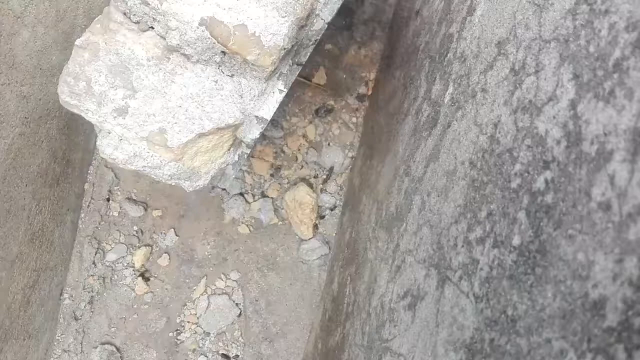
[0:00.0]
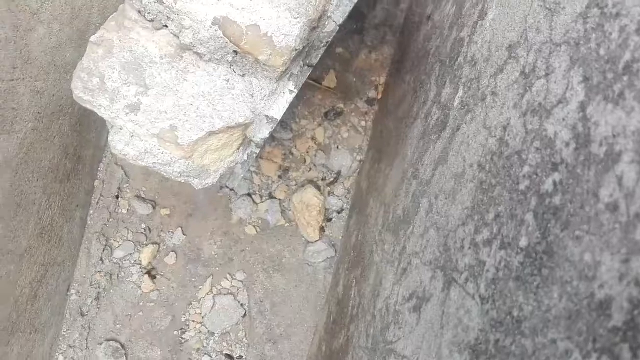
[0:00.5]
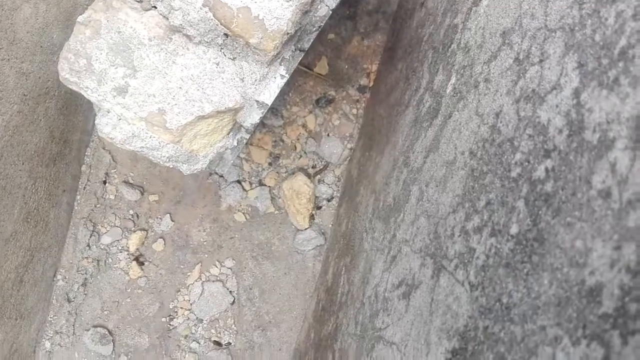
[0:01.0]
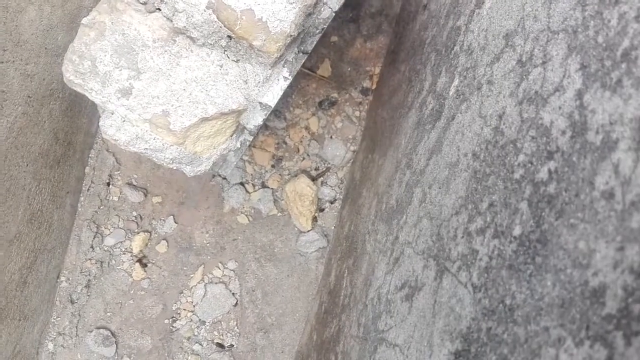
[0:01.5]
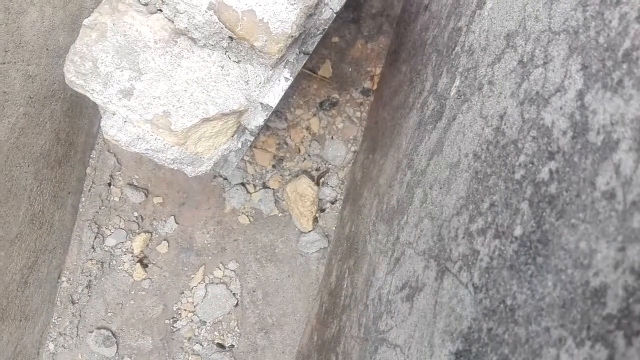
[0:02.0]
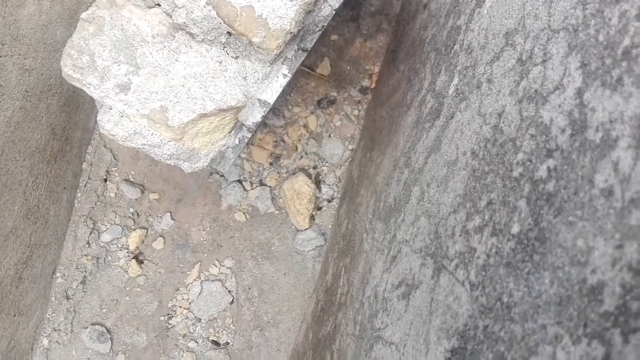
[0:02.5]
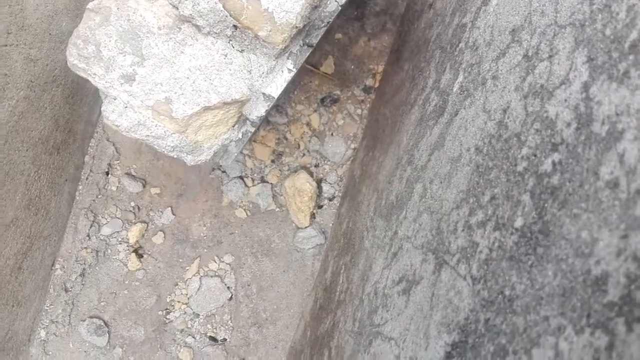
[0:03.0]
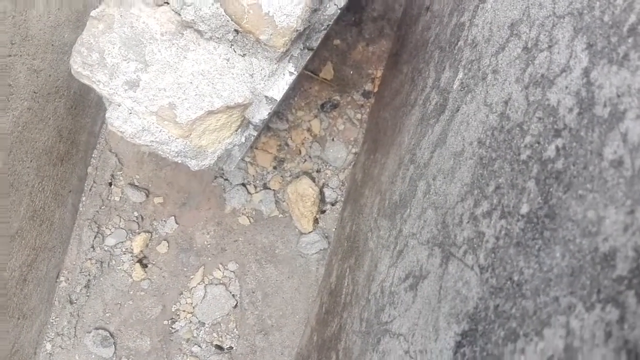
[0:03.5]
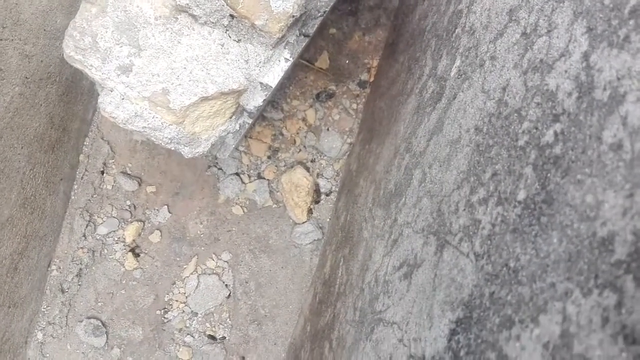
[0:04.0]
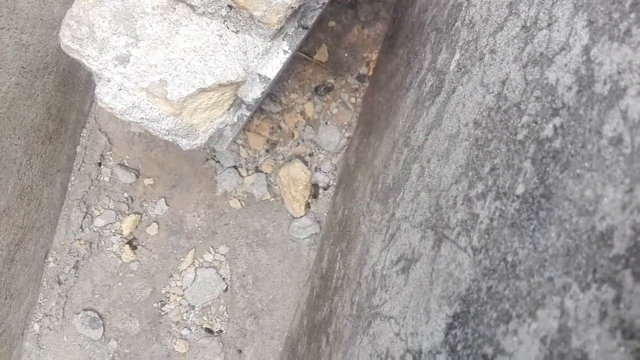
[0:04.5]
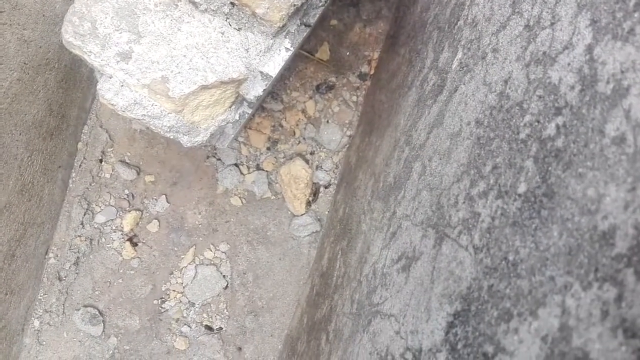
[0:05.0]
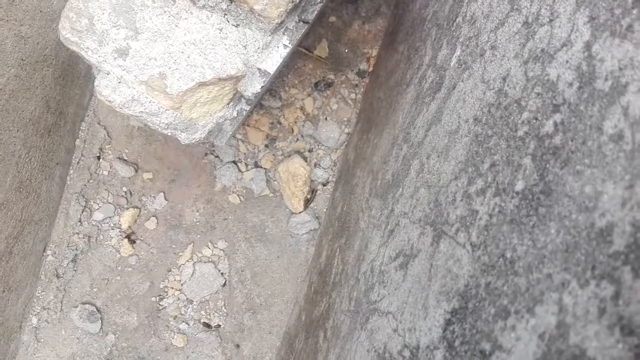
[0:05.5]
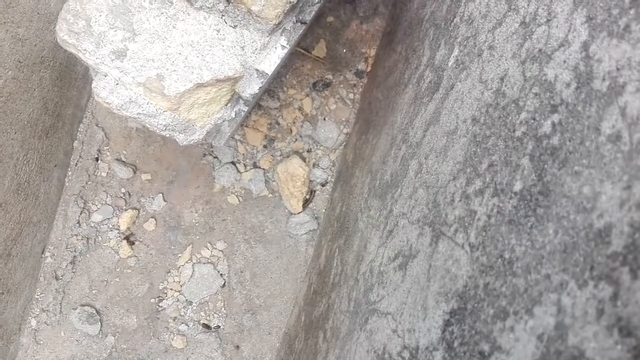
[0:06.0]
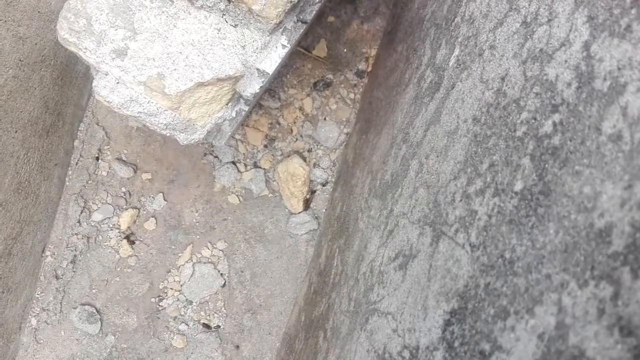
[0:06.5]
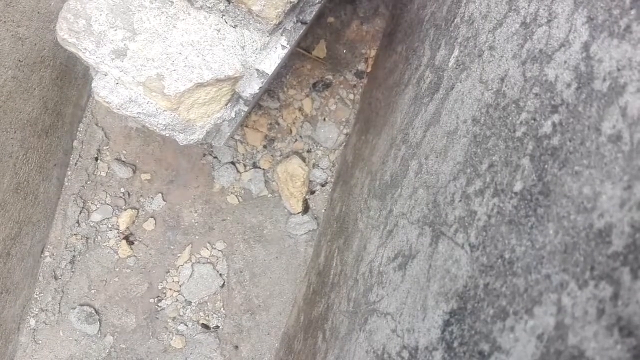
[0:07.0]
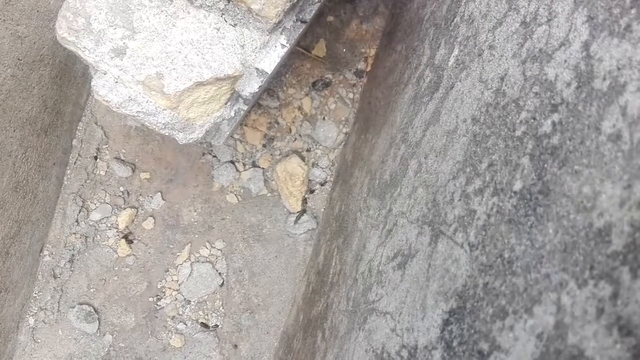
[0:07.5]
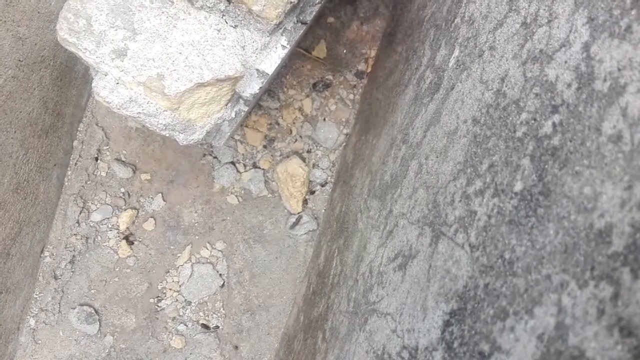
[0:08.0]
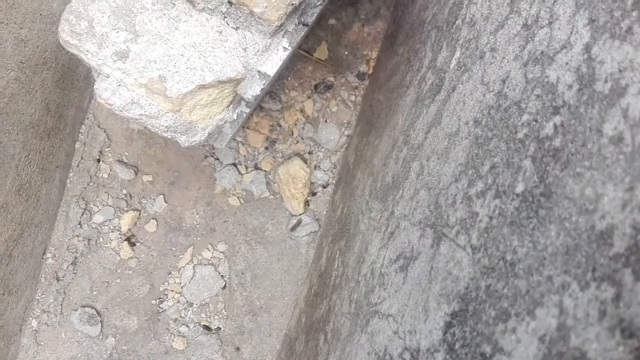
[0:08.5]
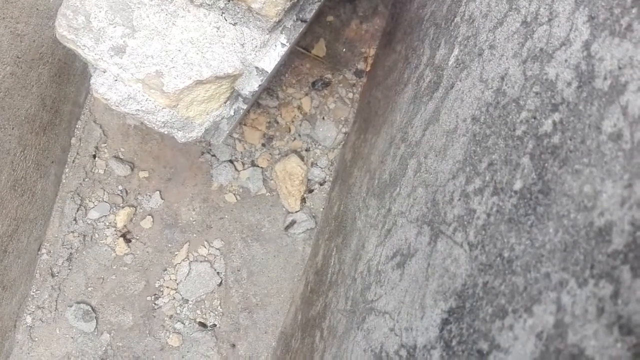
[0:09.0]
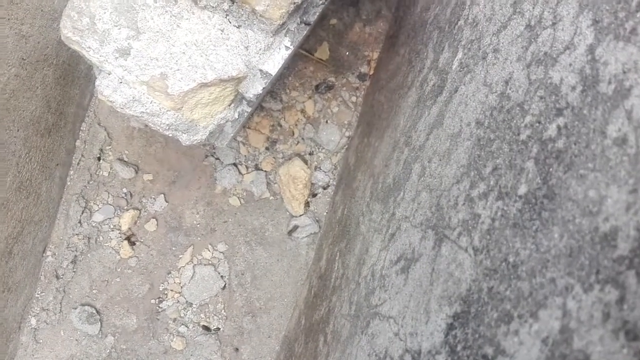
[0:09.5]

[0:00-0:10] Someone appears to have spotted an animal, insect or creature and seems to be trying to zoom in on it. It is hard to tell what it is; it looks somewhat like an odd caterpillar, but it moves very quickly for one, and it looks quite large compared with some of the rocks around it. The scene appears to be between two walls, with concrete at the base and bits of rock. There is a fairly large rock or boulder that looks like it is made of cement, so it seems man-made, perhaps from a building demolished nearby.